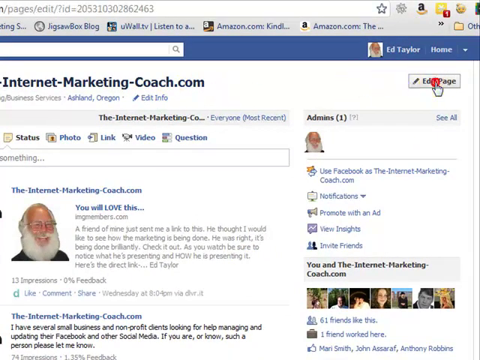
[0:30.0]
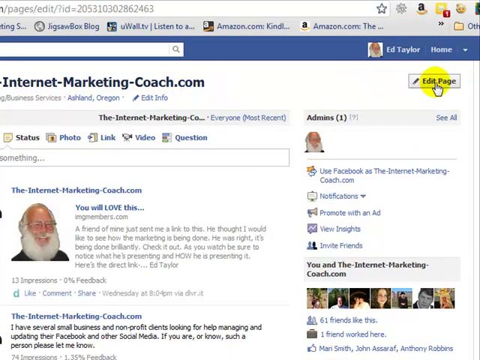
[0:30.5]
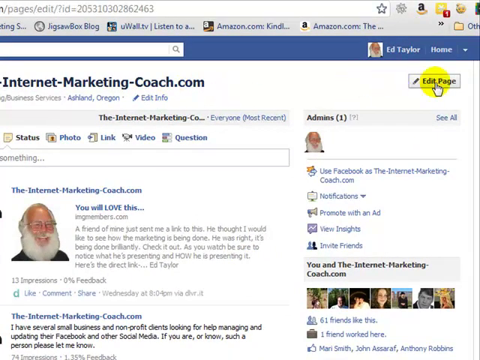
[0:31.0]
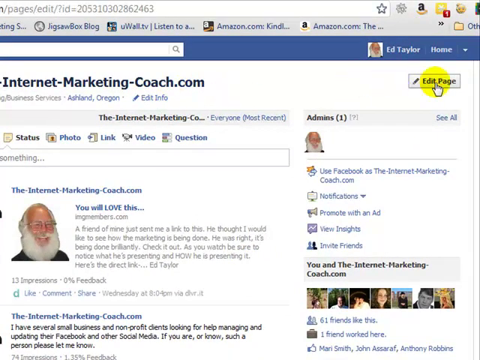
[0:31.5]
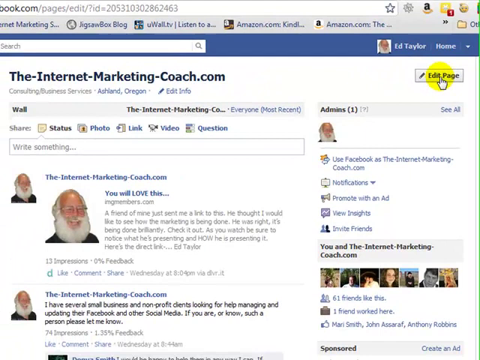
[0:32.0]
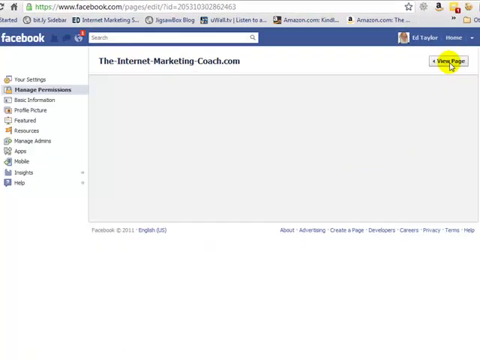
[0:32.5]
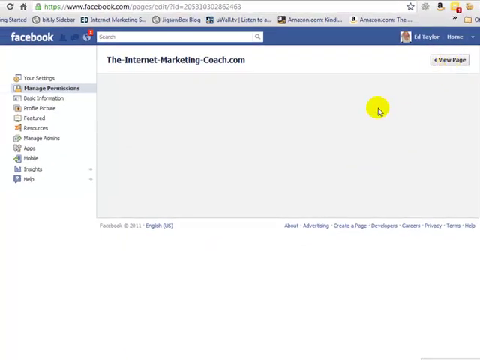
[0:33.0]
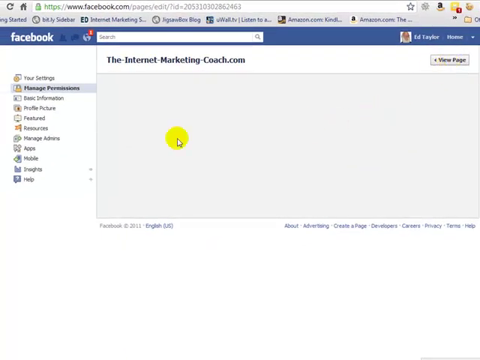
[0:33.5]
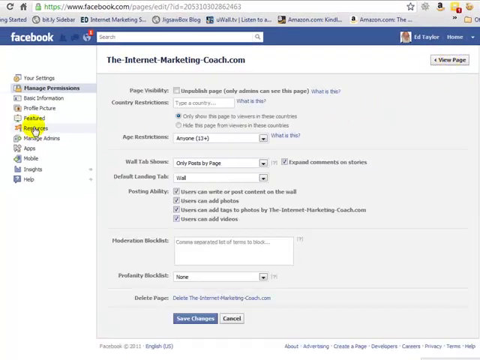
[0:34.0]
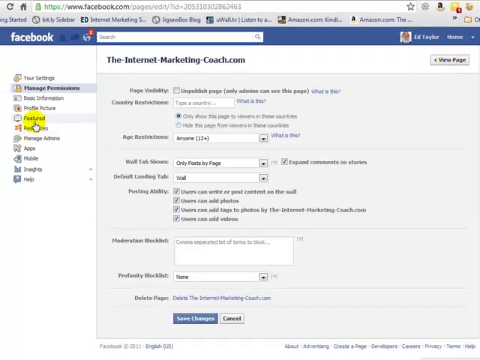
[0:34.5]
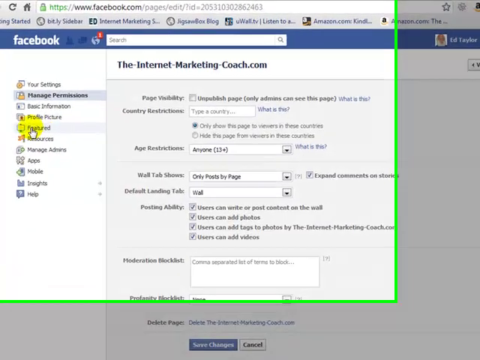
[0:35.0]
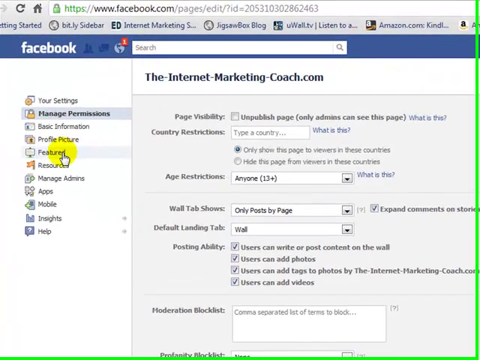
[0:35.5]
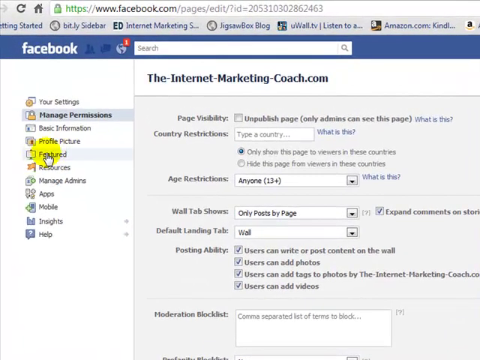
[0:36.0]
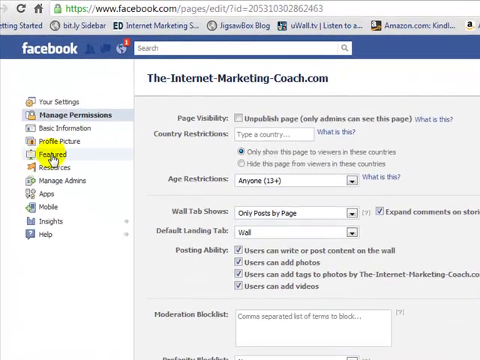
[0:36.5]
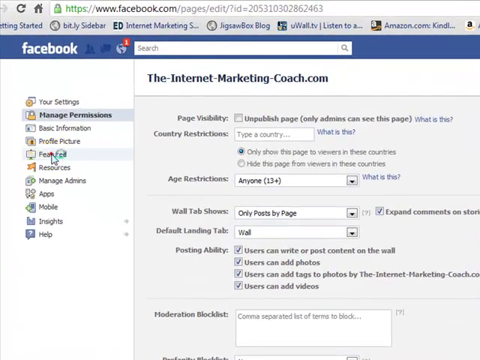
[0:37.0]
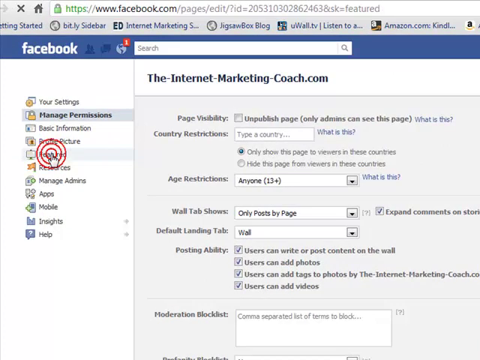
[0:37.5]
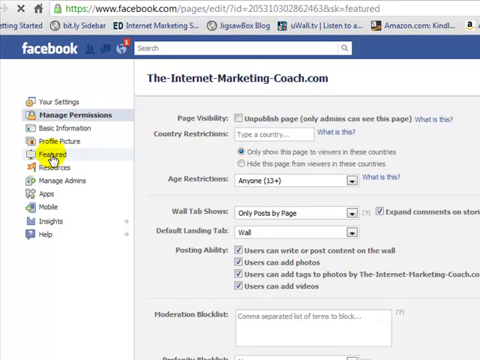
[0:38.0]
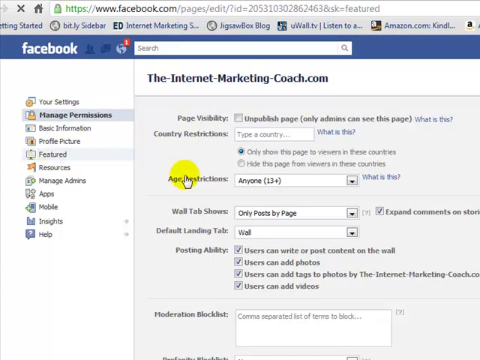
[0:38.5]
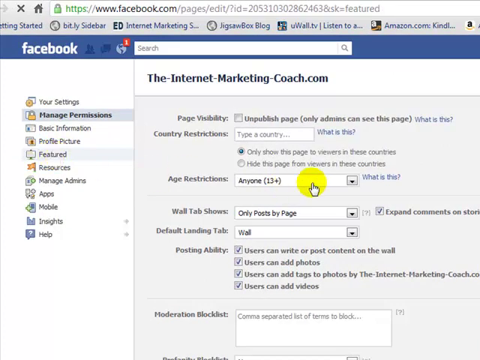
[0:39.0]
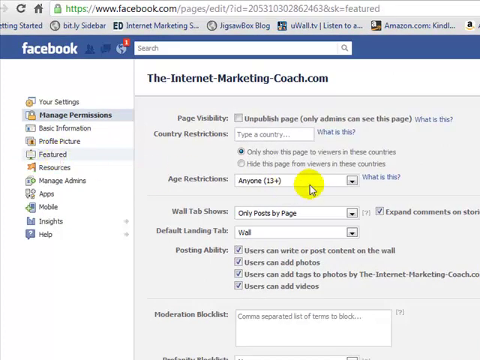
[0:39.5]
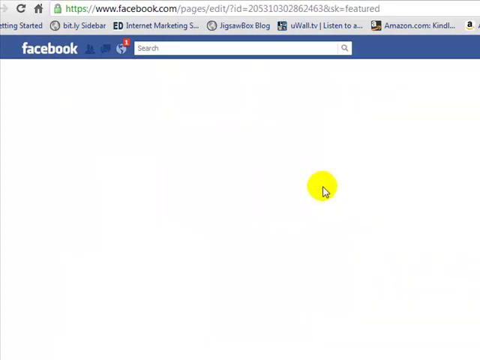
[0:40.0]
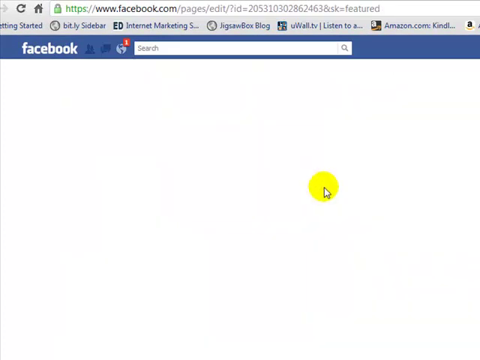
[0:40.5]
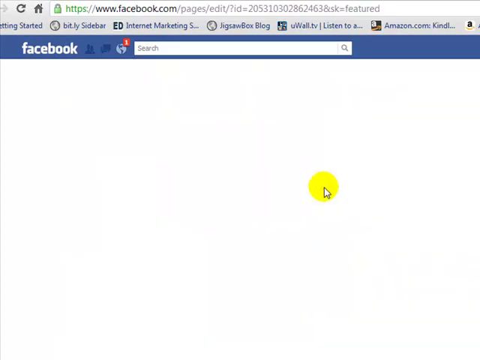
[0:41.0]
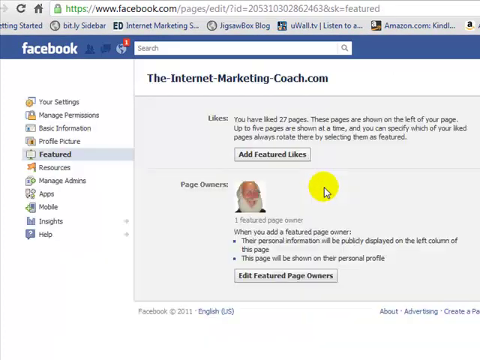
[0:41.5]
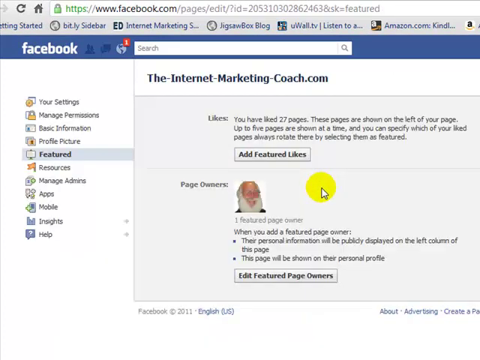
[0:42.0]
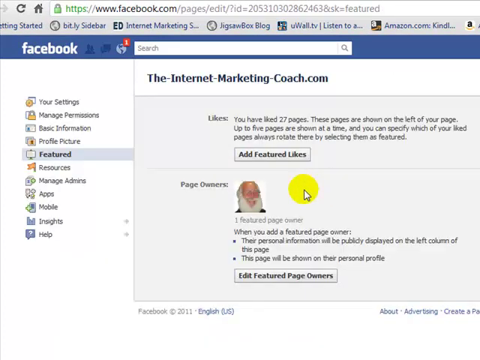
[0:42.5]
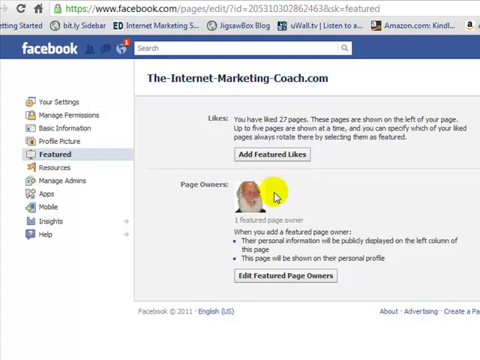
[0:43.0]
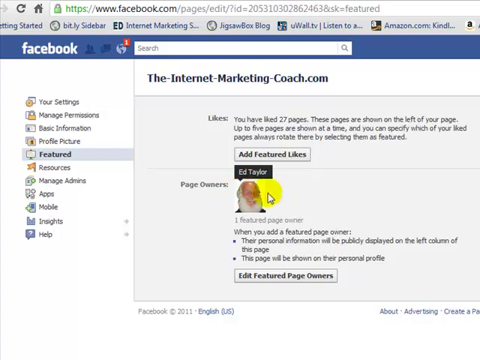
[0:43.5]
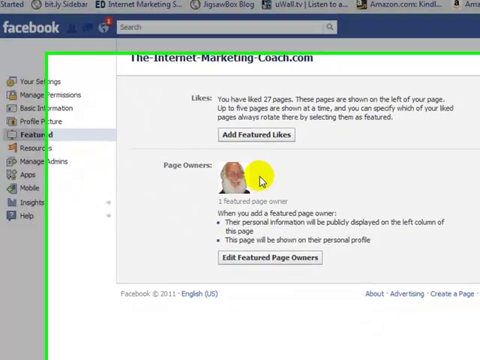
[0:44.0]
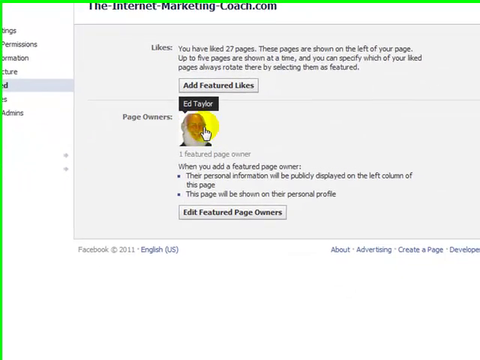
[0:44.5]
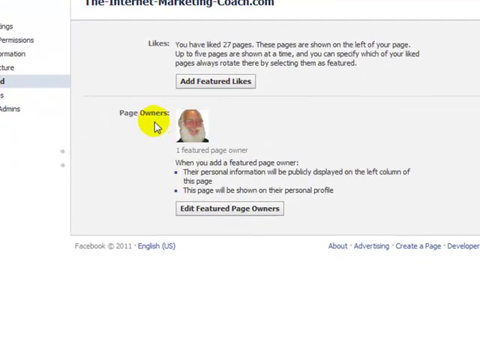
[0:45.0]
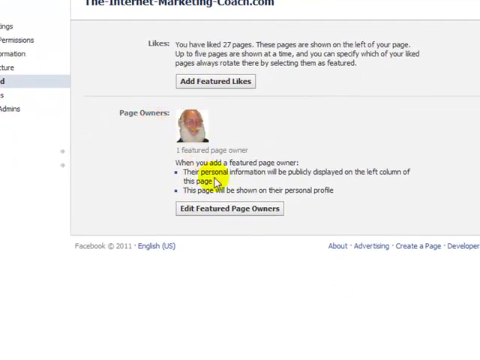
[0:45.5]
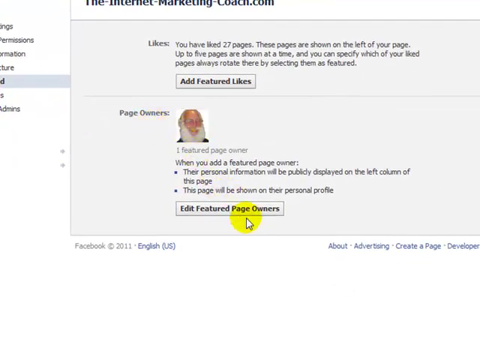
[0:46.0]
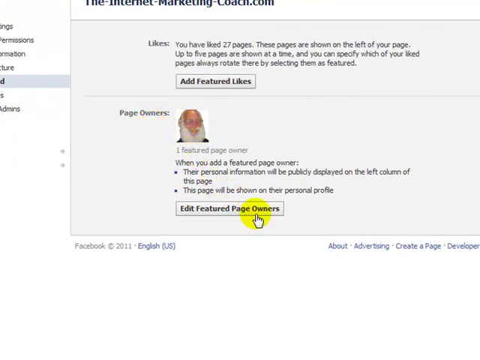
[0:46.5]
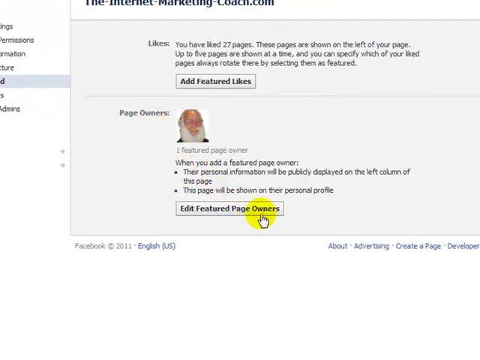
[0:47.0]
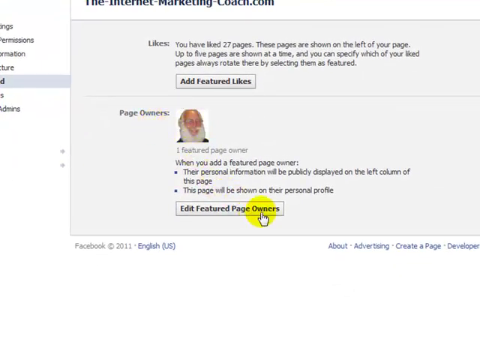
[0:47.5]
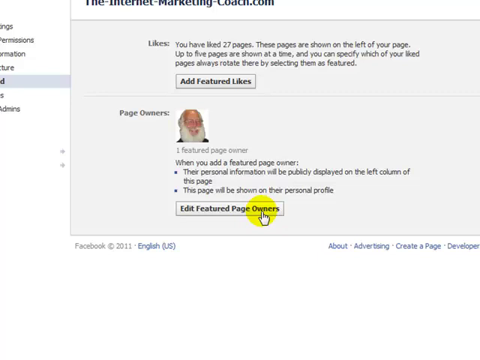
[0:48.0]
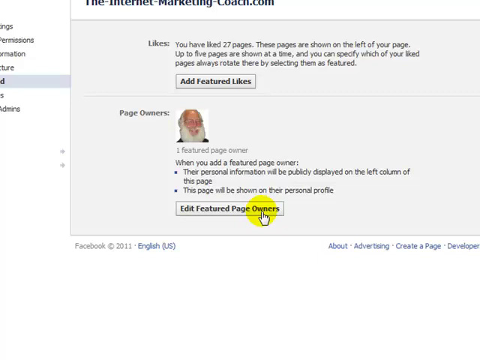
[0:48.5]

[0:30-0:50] A different Facebook page appears. At the top left-hand corner it says "Facebook," there is a search bar, and it says "the internetmarketingcoach.com." On the left-hand side is a list: your settings, manage permissions, basic information, profile picture, feature, resources, manage admins, apps, mobile, insights, and help. The cursor hovers over the man's face where it says "page earners." Text reads "likes you have like 27 pages these pages are shown on the left of your page up to five pages are shown at a time and you can specify which of your liked pages always rotate there by selecting them as featured." It then says "add featured likes" in a box, and also says "when you add a featured page owner" followed by two bullet points. Different options, such as a search bar, are shown at the top.